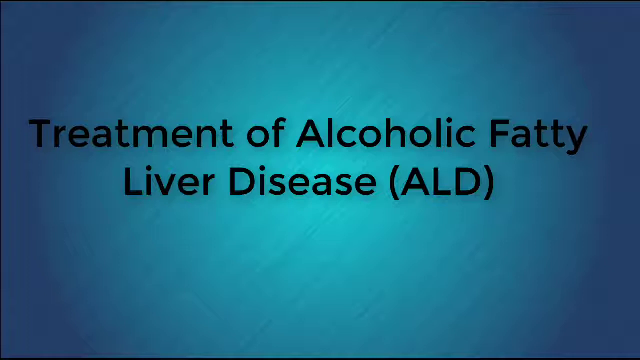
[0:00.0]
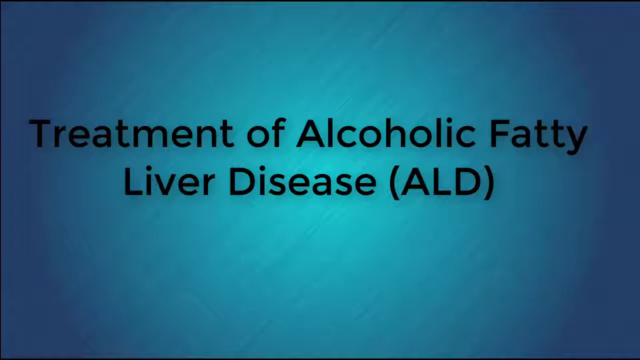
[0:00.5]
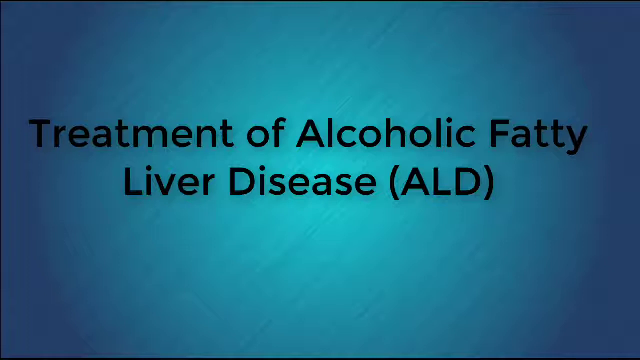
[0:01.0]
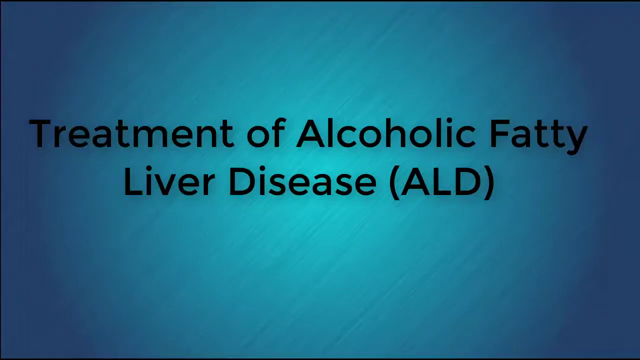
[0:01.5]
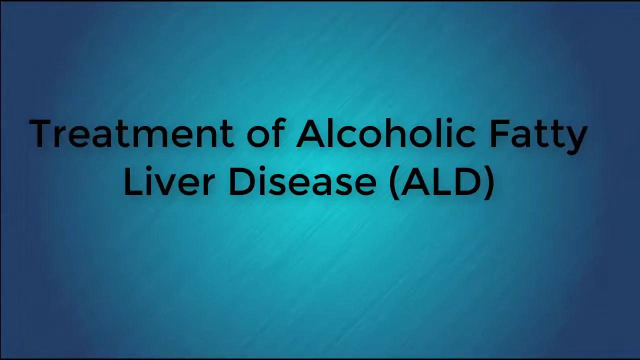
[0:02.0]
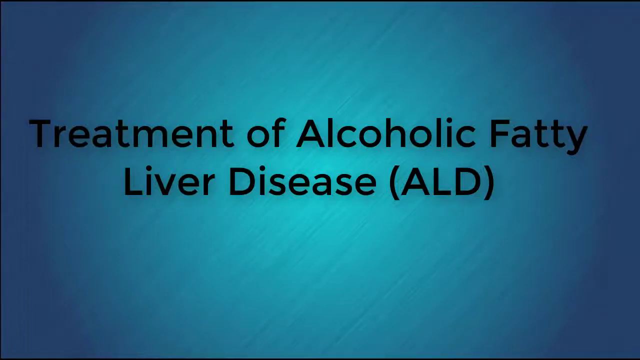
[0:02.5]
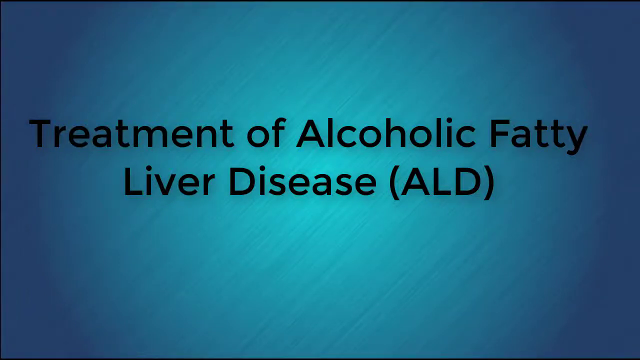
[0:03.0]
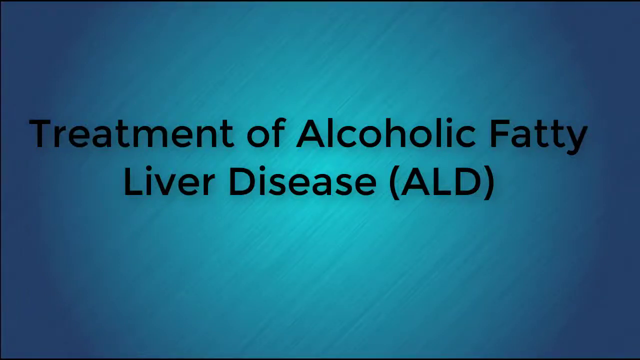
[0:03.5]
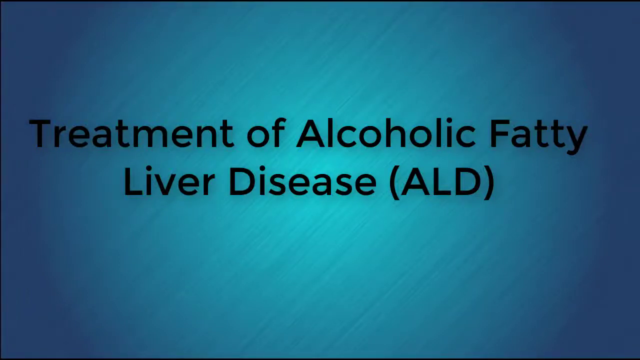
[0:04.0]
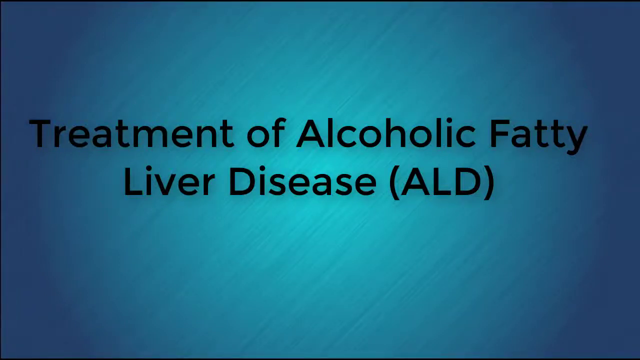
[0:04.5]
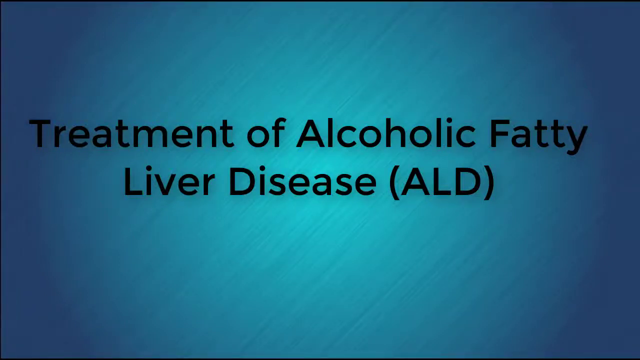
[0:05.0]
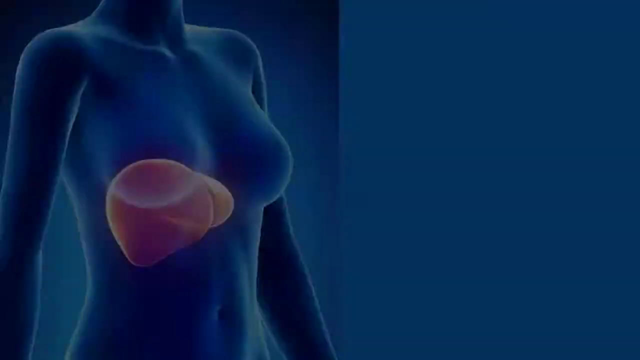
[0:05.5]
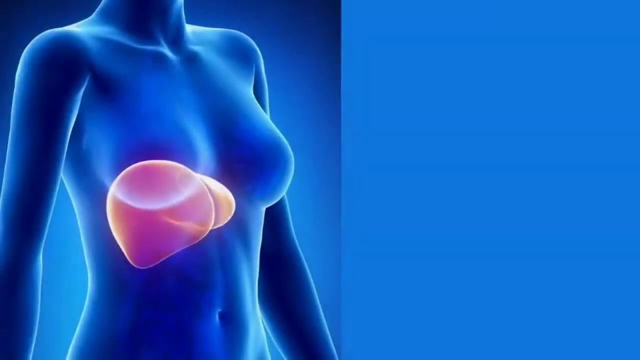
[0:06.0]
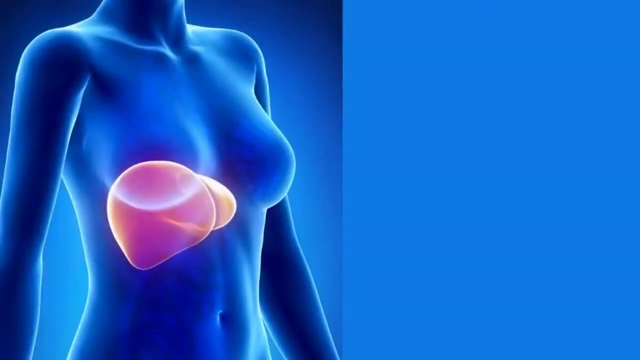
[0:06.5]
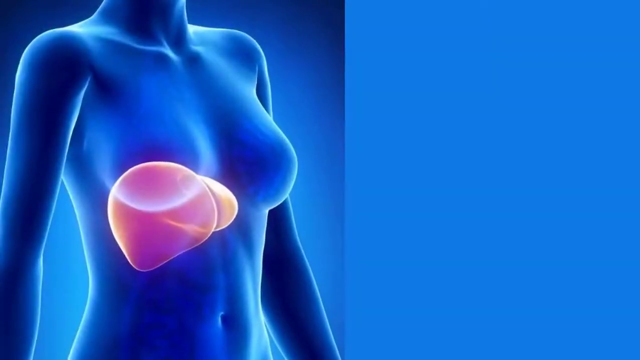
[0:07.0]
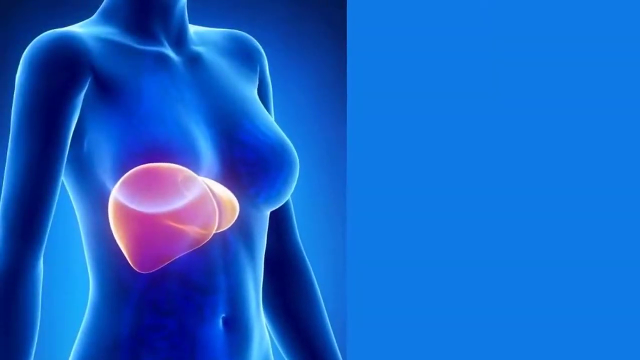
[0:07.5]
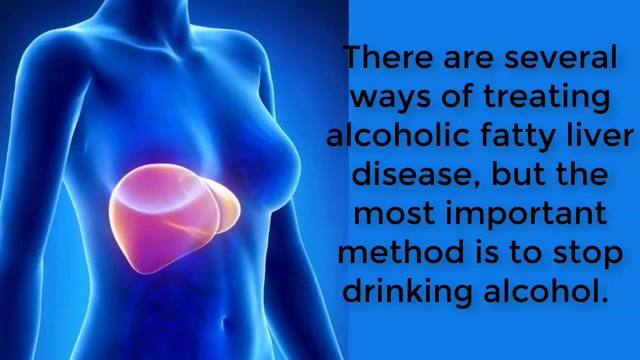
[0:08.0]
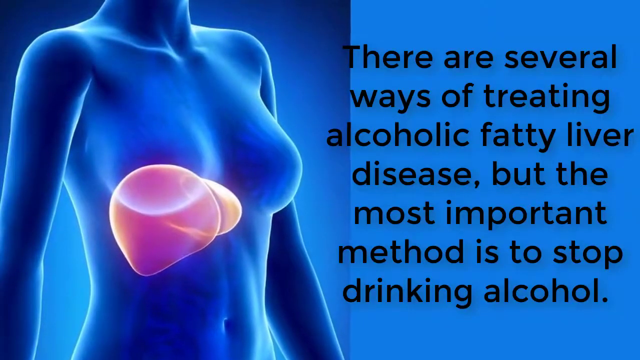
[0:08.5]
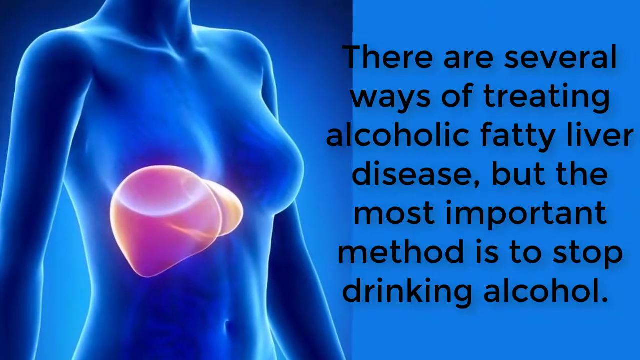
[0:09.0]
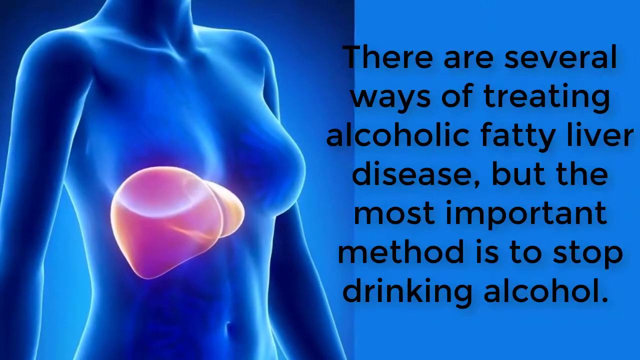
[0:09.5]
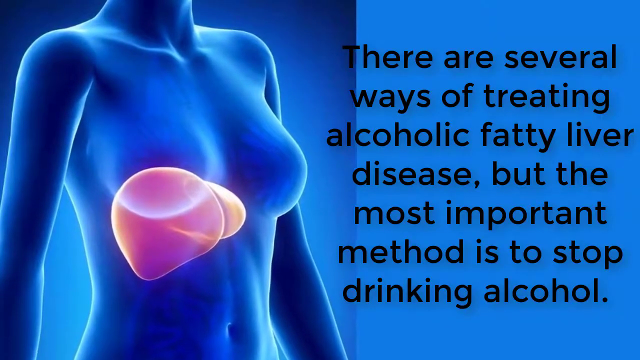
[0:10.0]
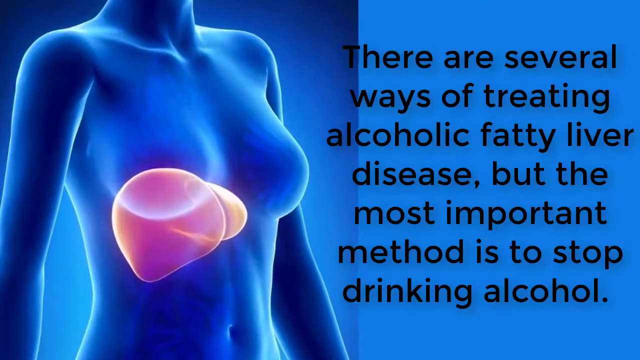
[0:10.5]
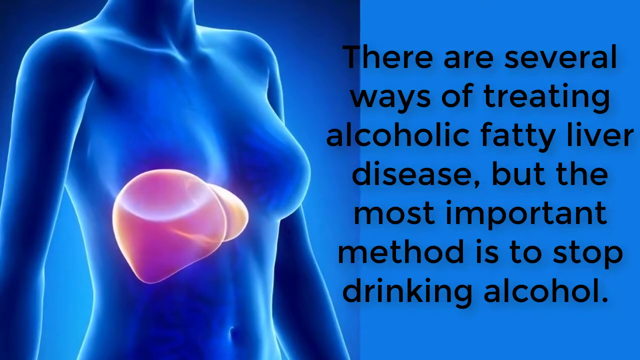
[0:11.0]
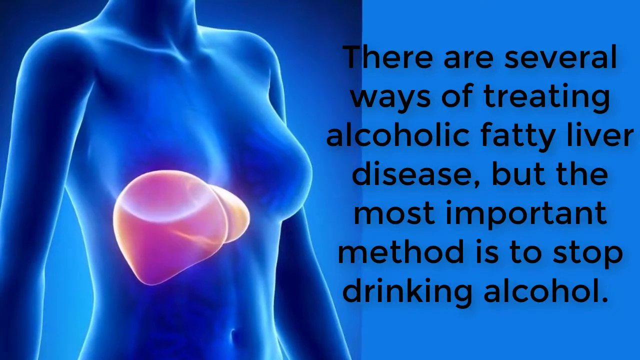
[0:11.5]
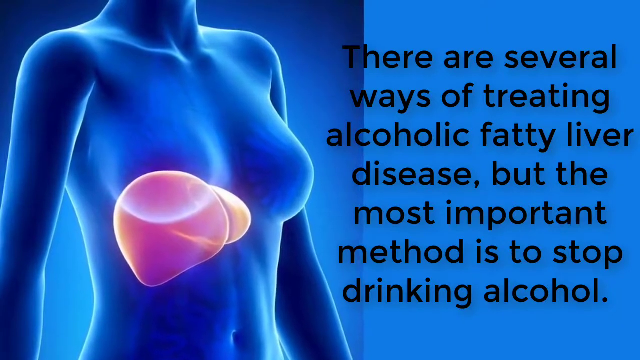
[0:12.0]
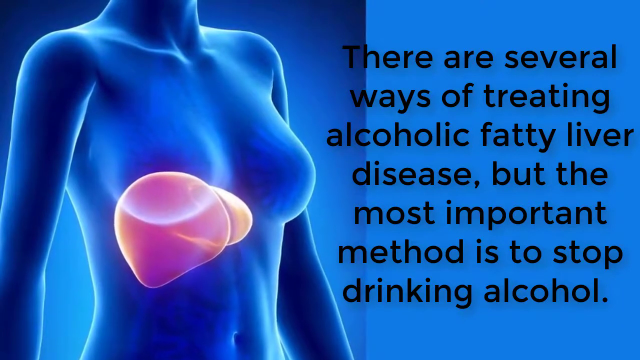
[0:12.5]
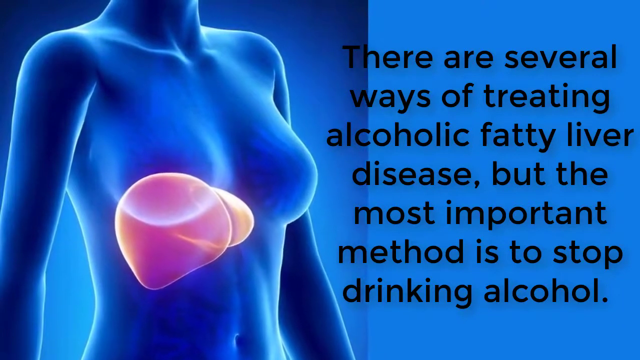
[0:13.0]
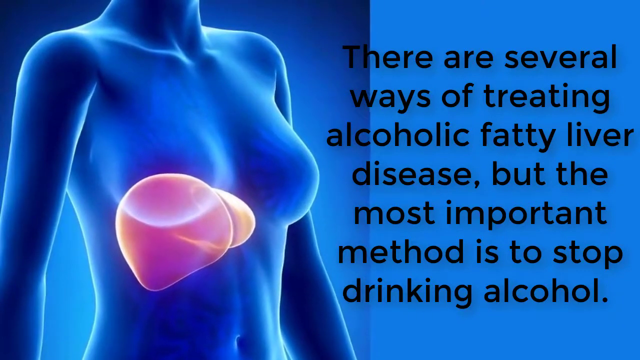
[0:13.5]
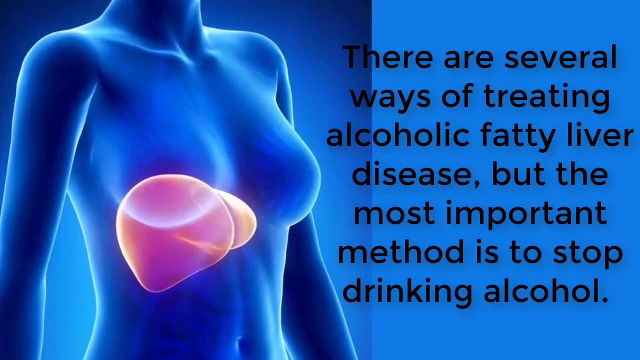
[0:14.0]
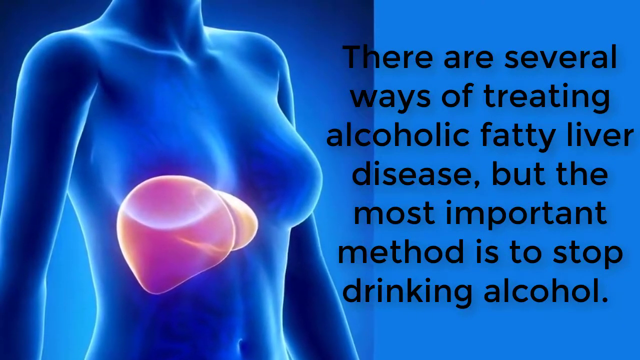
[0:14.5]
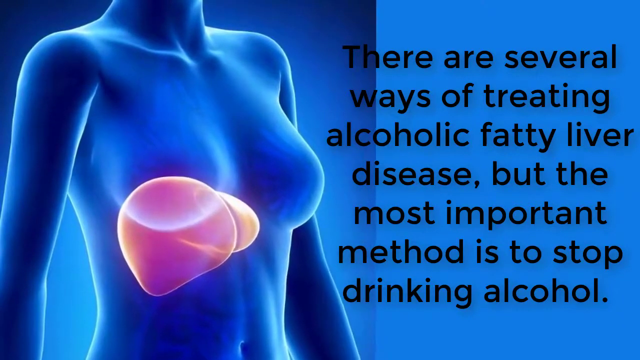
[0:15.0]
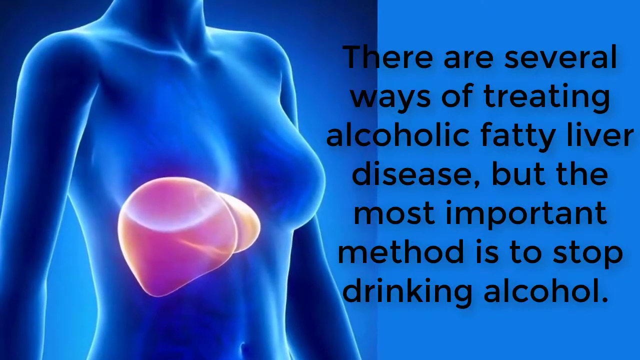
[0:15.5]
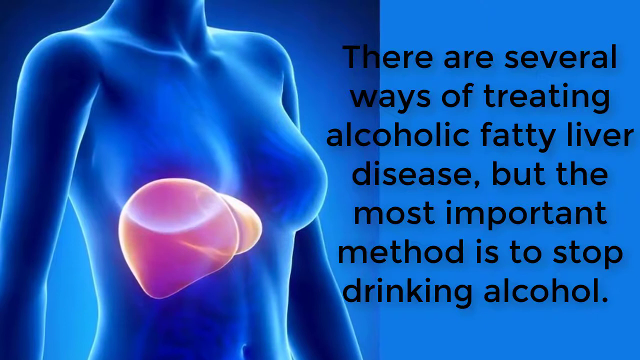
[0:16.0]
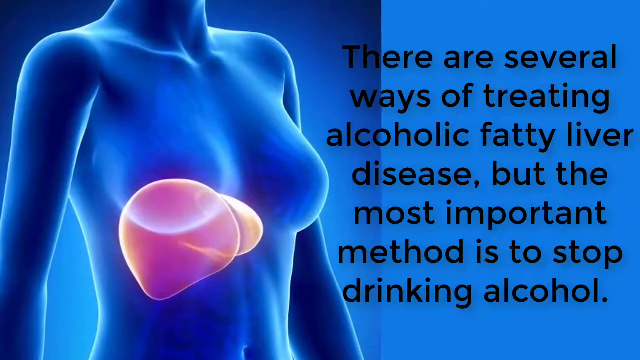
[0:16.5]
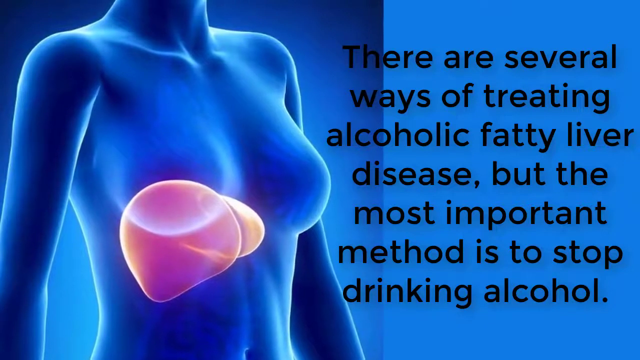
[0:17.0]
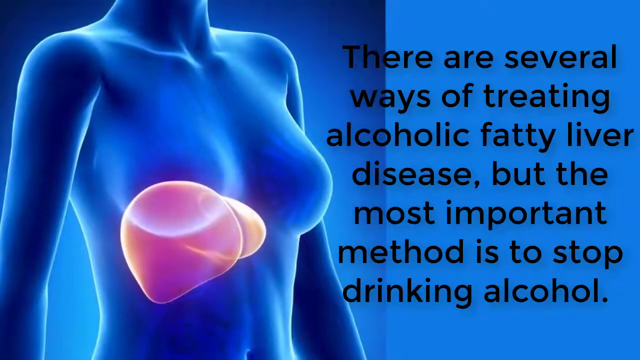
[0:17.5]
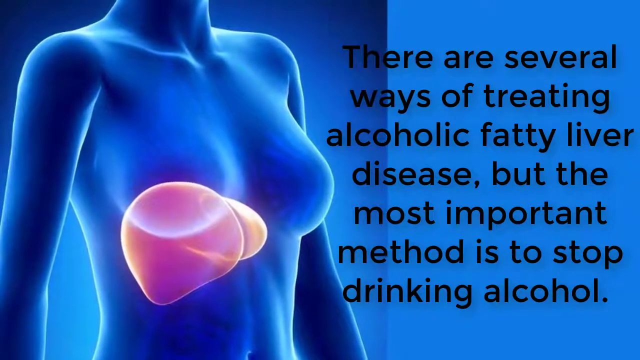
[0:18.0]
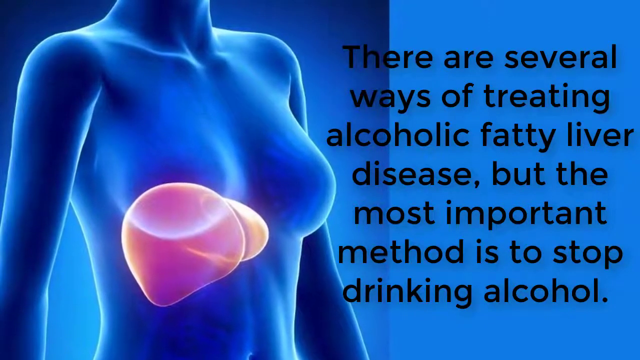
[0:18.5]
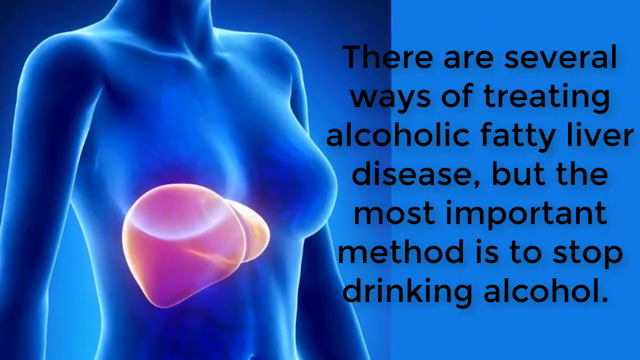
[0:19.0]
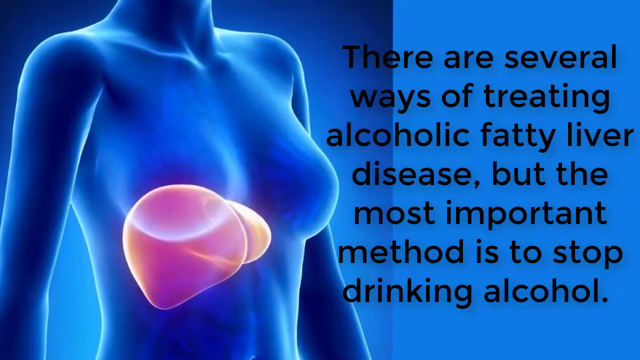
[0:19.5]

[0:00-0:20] Black text on a dark blue background reads "Treatment of Alcoholic Fatty Liver Disease (ALD)". Next, a woman's body, almost like a mannequin, appears on the left side of the screen. Her head is not visible; the upper part of her body is shown down to her stomach. A pink bubble on her right breast and underneath it highlights a particular area. Black text then appears on the right side of the screen: "There are several ways of treating alcohol fatty liver disease, but the most important method is to stop drinking alcohol." The body stays on the left side of the screen and comes closer to the camera, focusing on the breast and the area right under it, with two small, almost circular pink shapes highlighting that area.